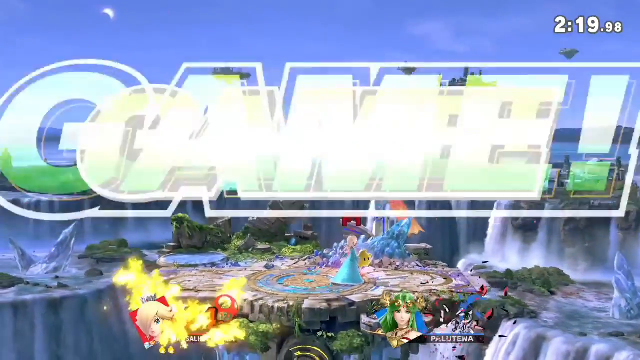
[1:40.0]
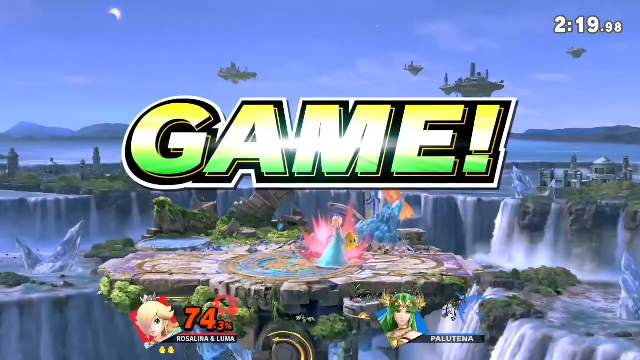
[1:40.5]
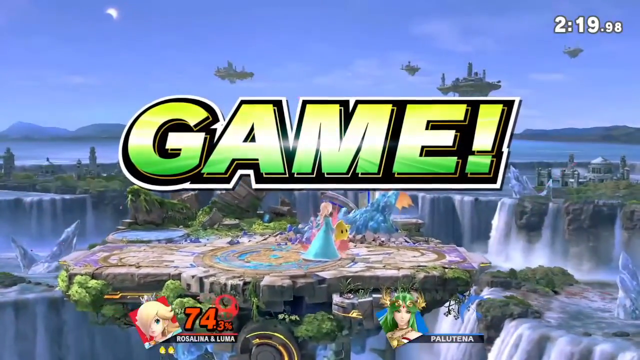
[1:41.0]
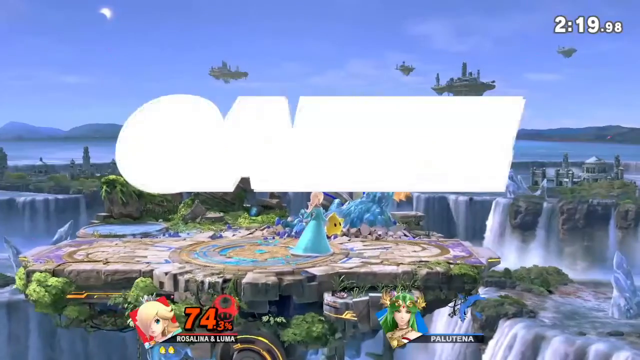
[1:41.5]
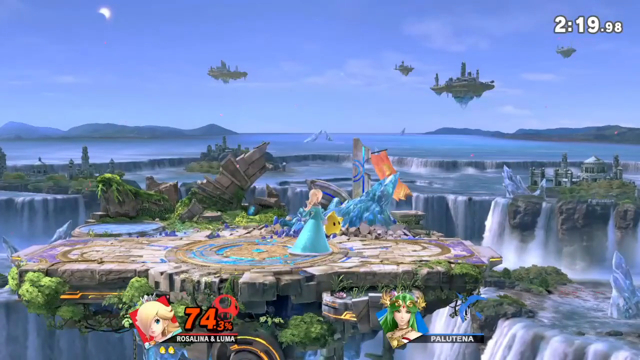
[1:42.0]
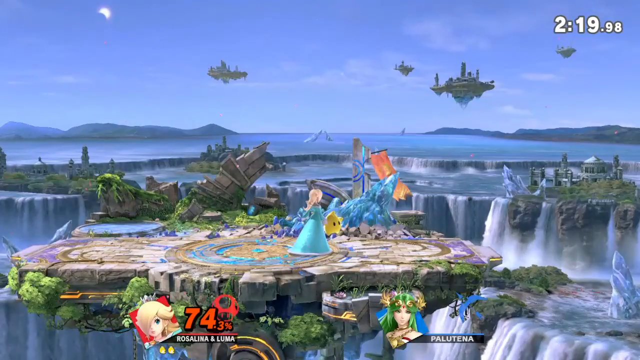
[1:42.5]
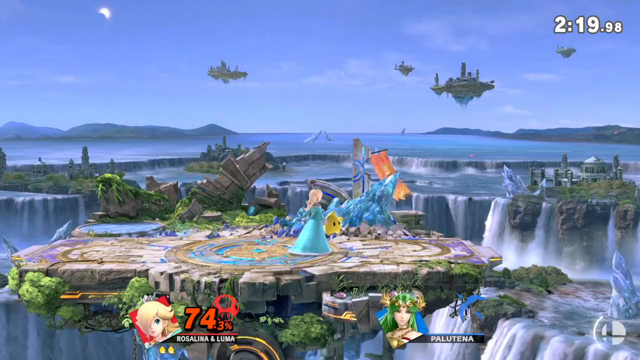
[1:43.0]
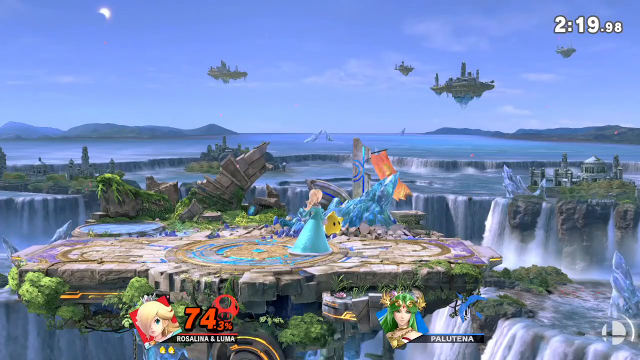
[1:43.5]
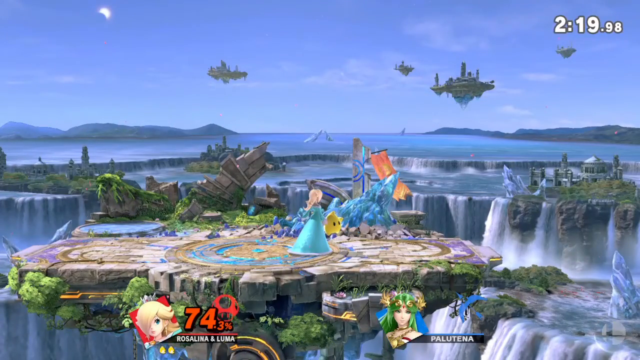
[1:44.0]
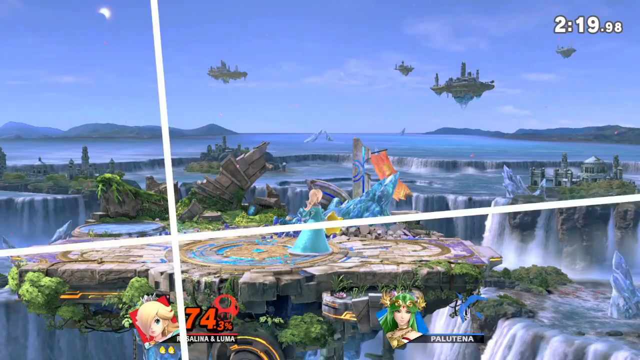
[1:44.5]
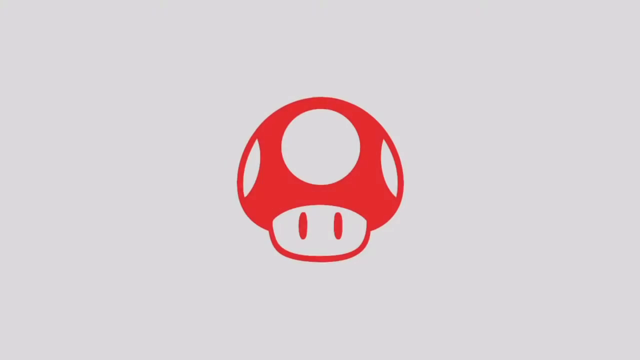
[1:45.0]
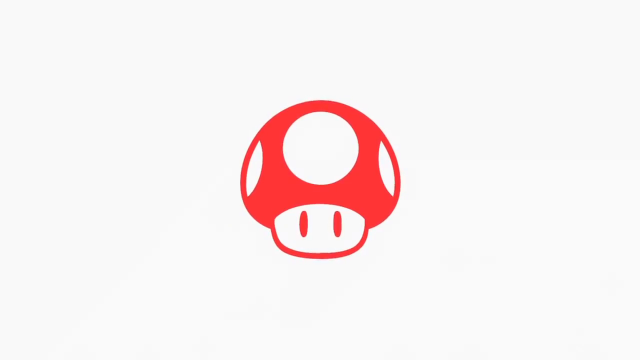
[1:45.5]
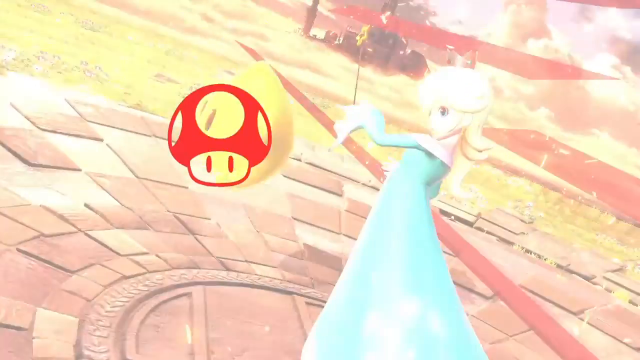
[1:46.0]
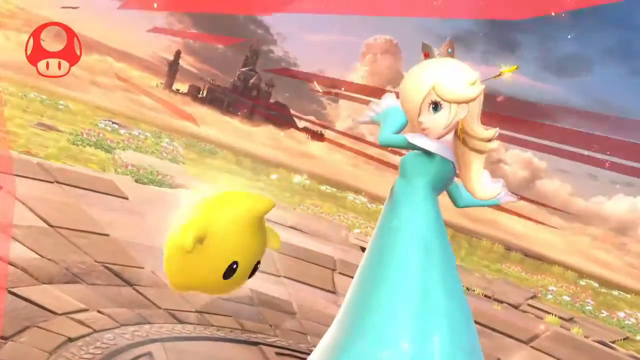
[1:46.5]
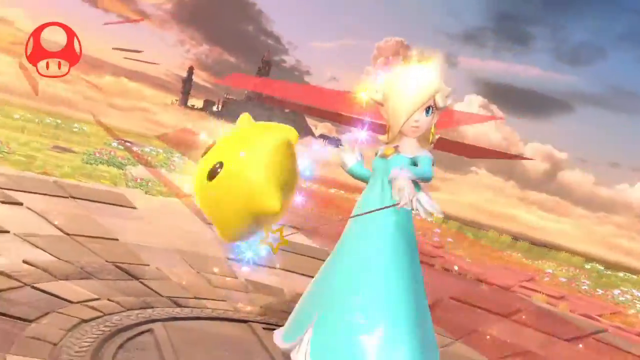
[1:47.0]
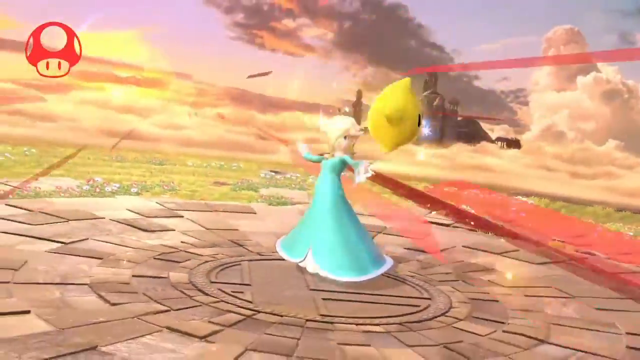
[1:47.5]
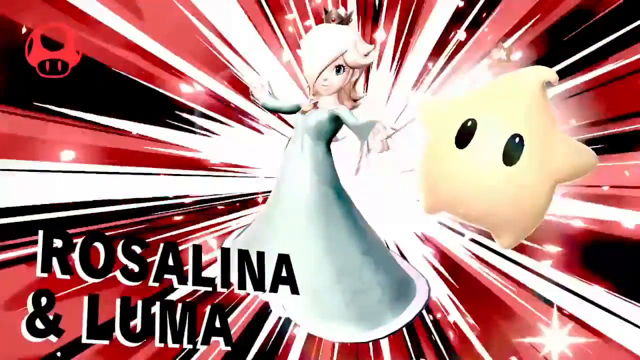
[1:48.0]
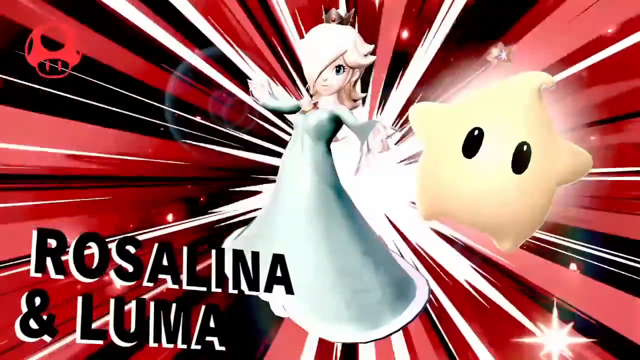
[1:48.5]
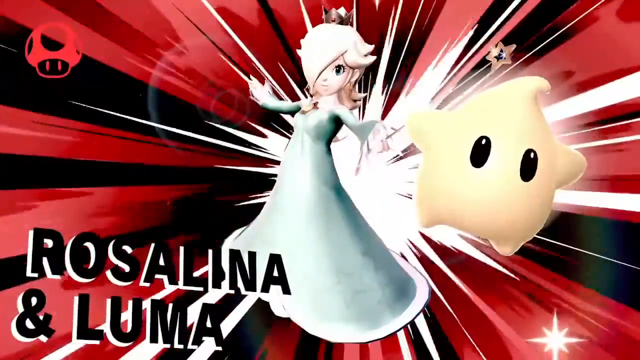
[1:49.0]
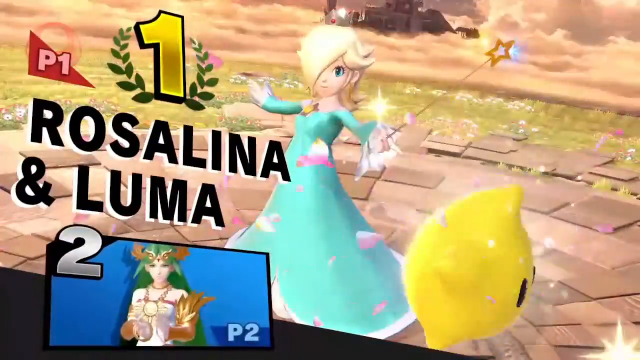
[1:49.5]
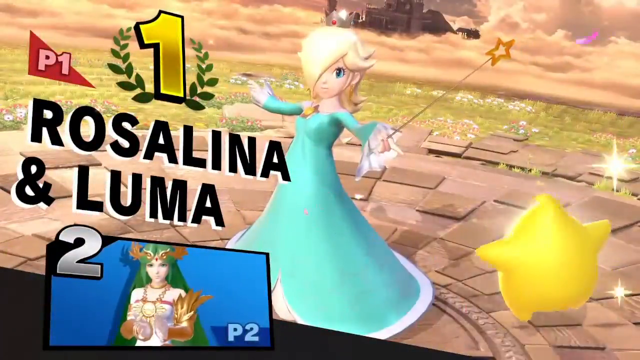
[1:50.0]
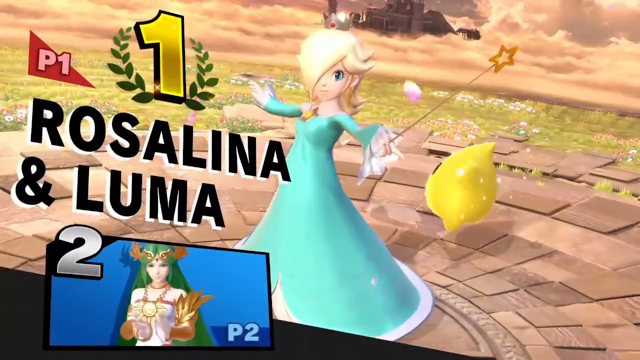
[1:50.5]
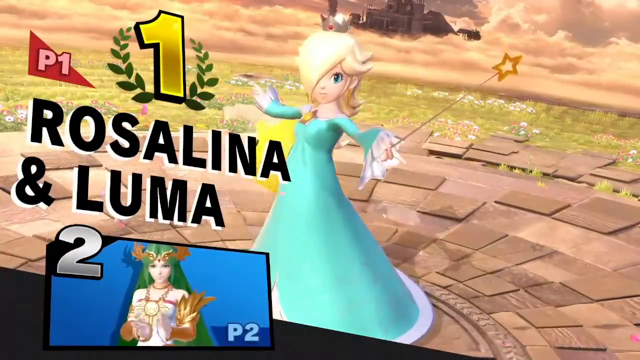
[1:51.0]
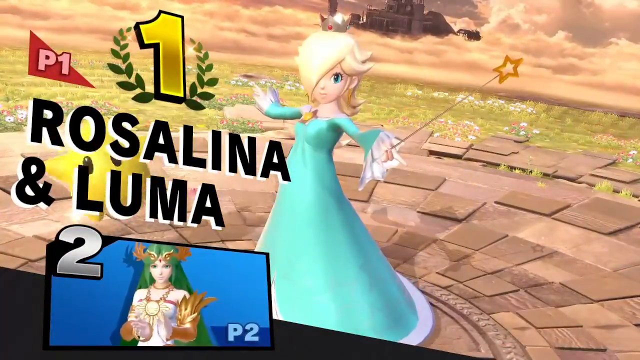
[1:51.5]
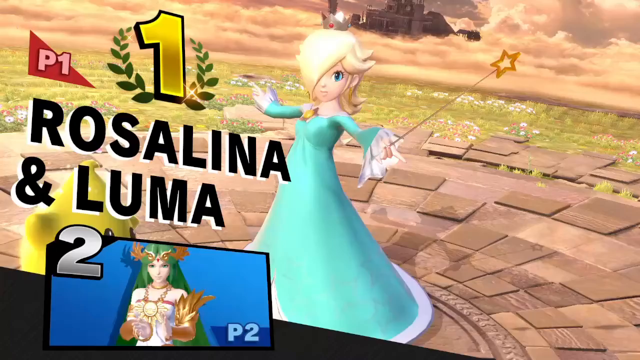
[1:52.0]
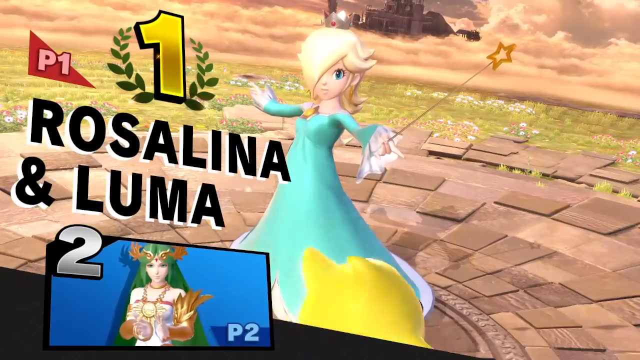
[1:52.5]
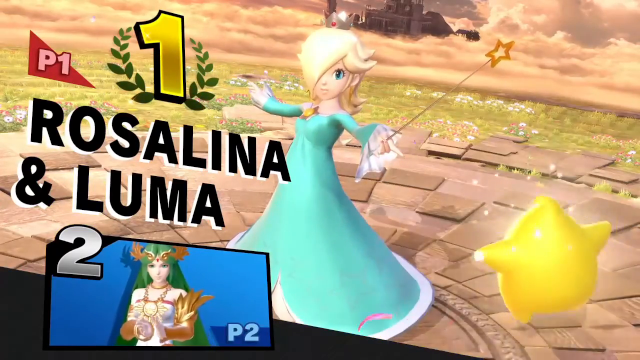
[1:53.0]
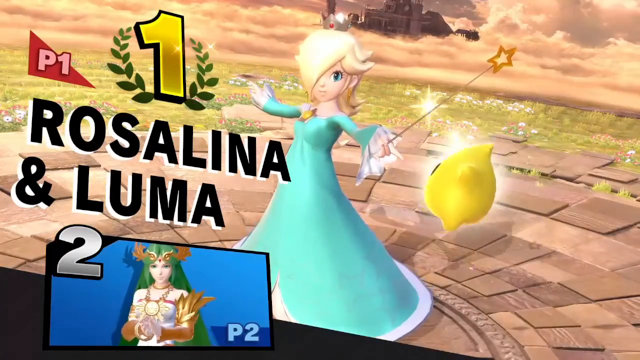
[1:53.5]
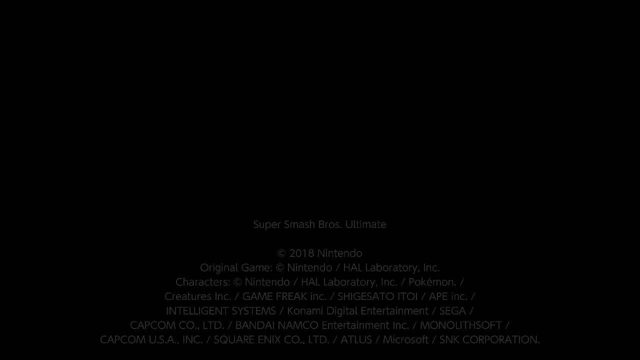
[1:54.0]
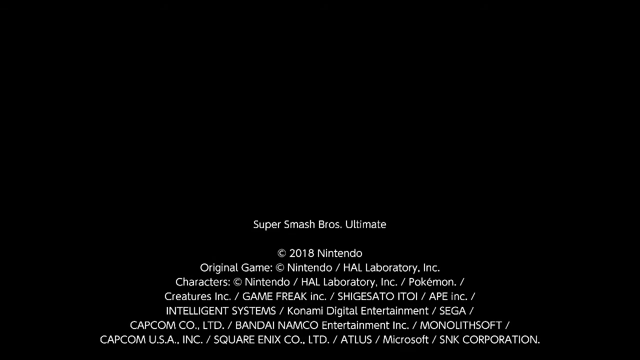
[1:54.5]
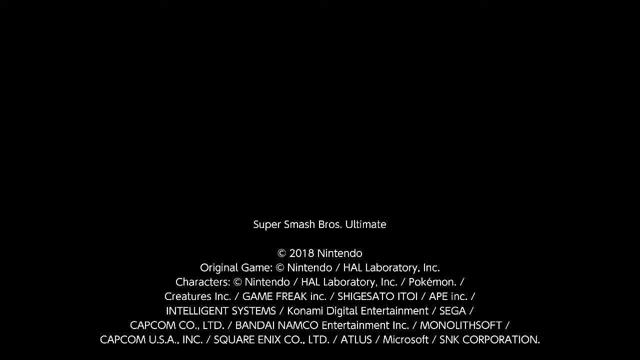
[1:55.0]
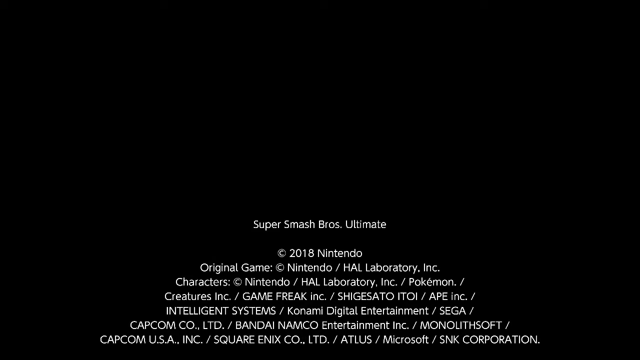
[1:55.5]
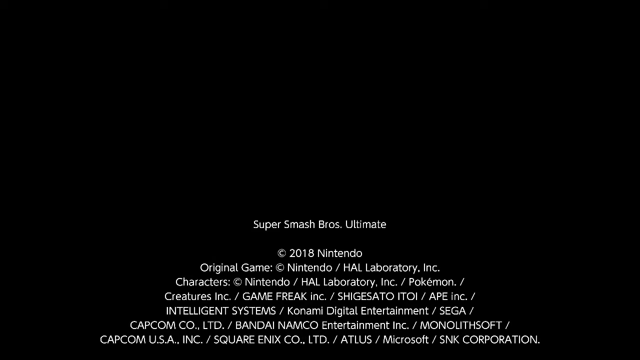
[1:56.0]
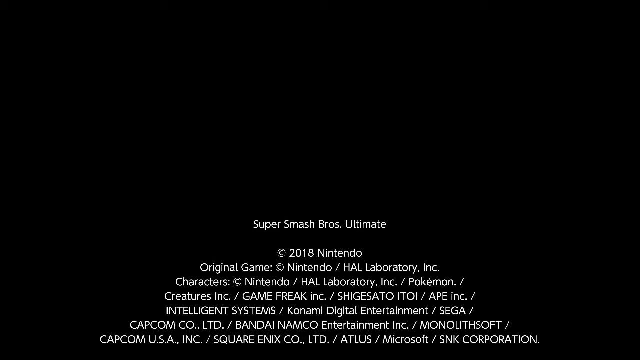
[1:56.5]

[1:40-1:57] The timer, in fairly large white numbers, remains at the top right of the screen and reads 2 minutes and 19 seconds. The moon, which was a circle, now appears to be more like a crescent moon. Large green and white letters outlined in white read "GAME!" in all capitals. Only Rosalina and Luma are left on the platform. The video then cuts to a screen with a red mushroom logo featuring Rosalina and Luma with a red and black starburst graphic behind them, showing that they placed first while Palutena placed second and lost the fight. Rosalina is holding a wand with a star at the end of it, and Luma is yellow rather than the red she was earlier. The video then cuts to a credit screen reading "Super Smash Brothers Ultimate, copyright 2018, Nintendo" with more credits underneath.